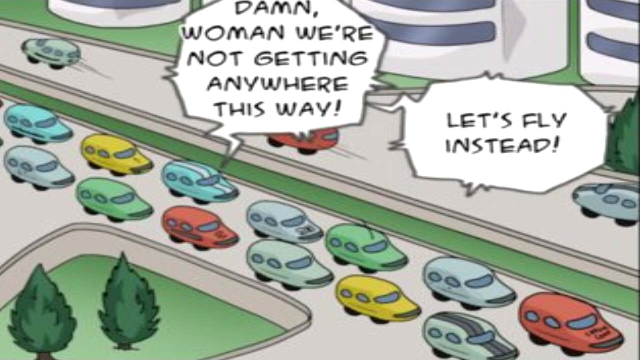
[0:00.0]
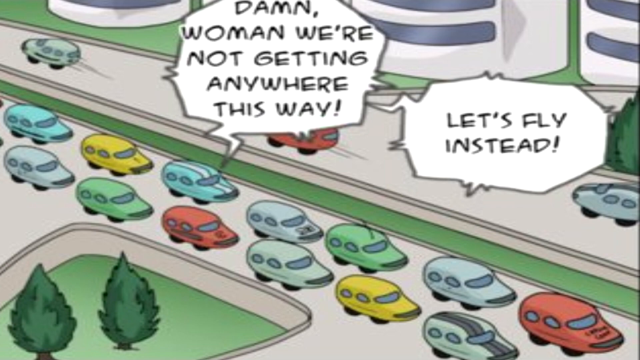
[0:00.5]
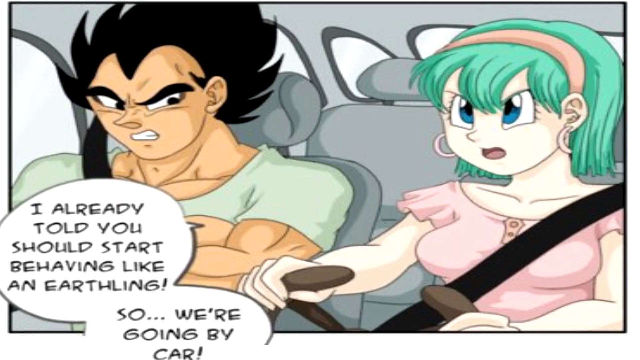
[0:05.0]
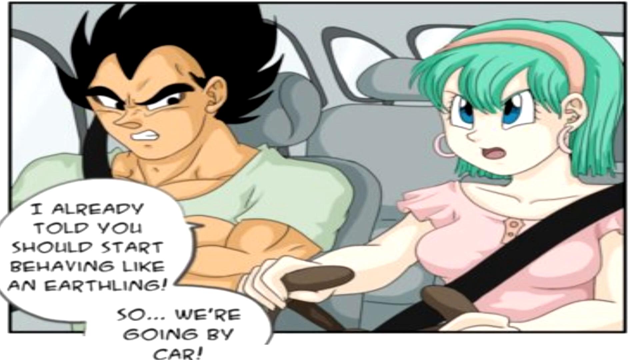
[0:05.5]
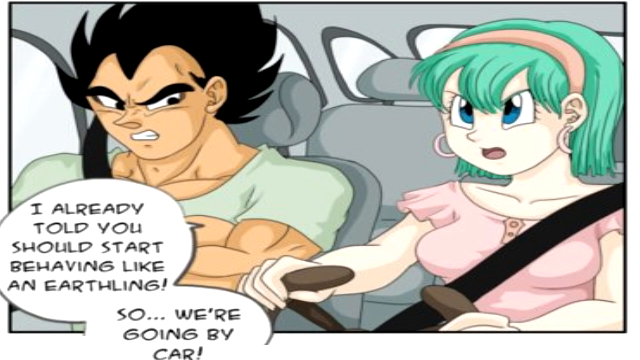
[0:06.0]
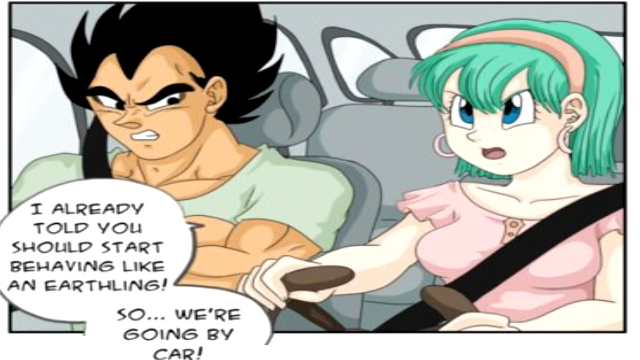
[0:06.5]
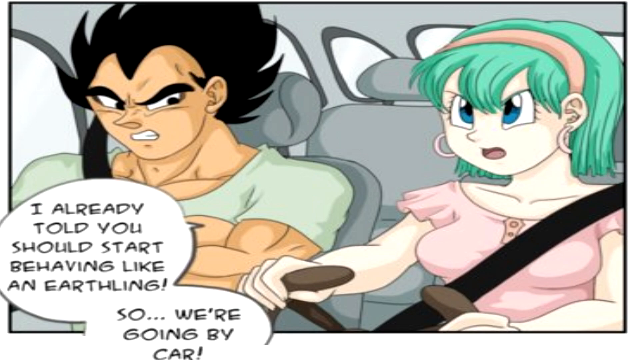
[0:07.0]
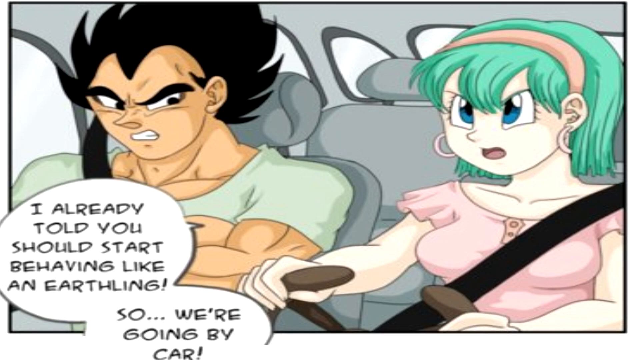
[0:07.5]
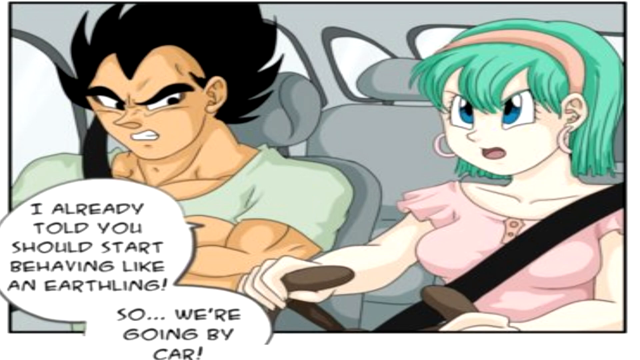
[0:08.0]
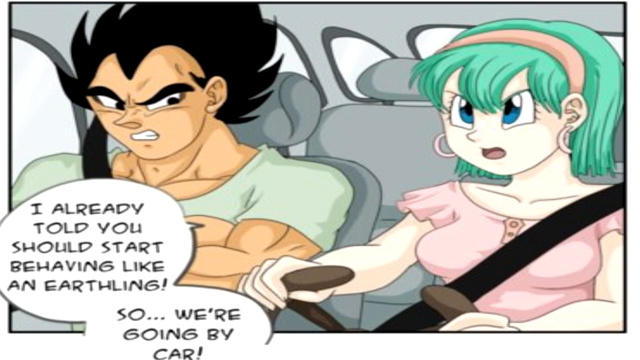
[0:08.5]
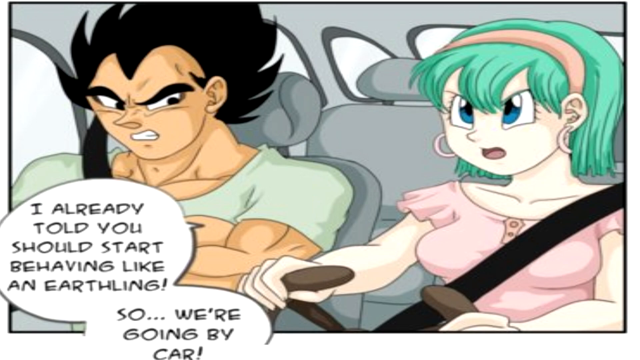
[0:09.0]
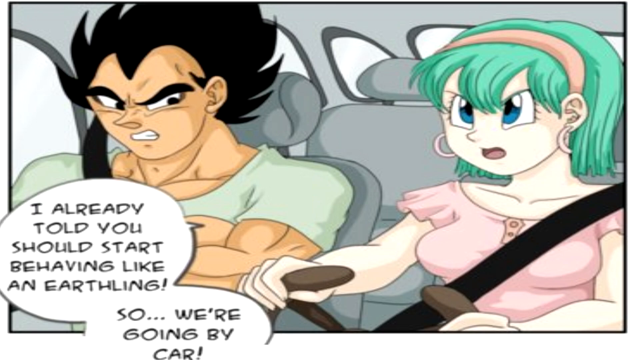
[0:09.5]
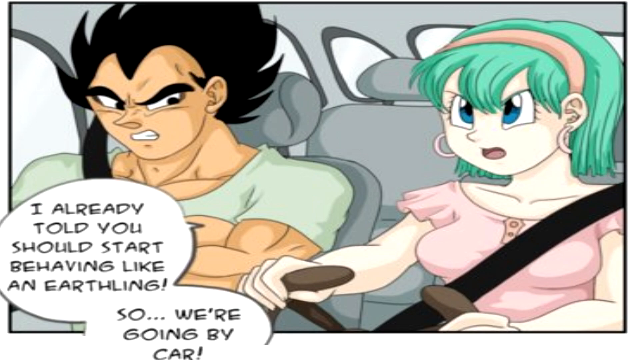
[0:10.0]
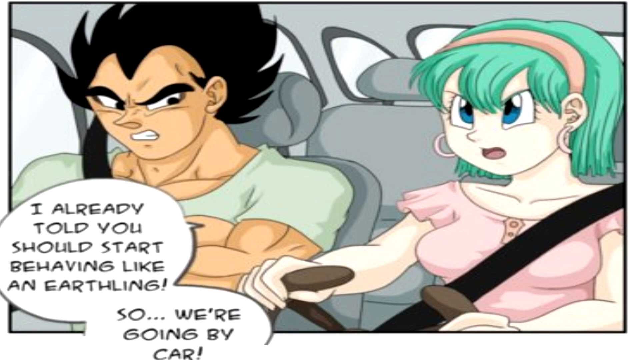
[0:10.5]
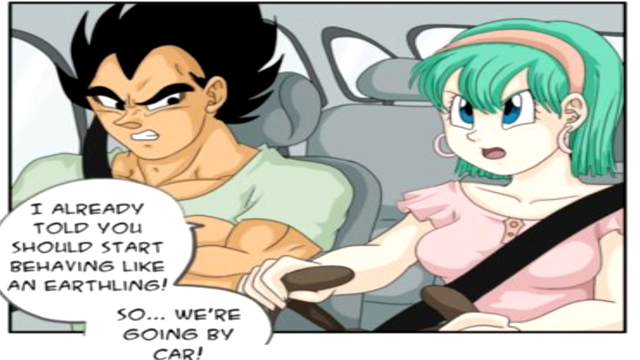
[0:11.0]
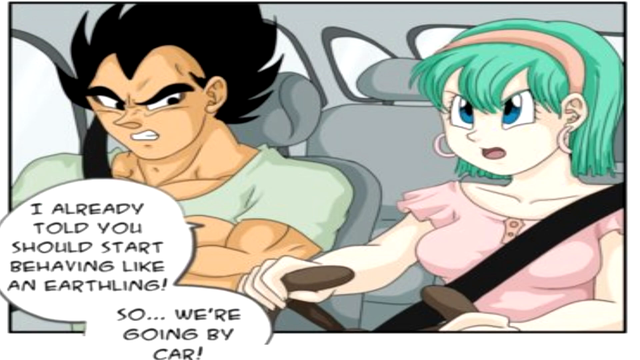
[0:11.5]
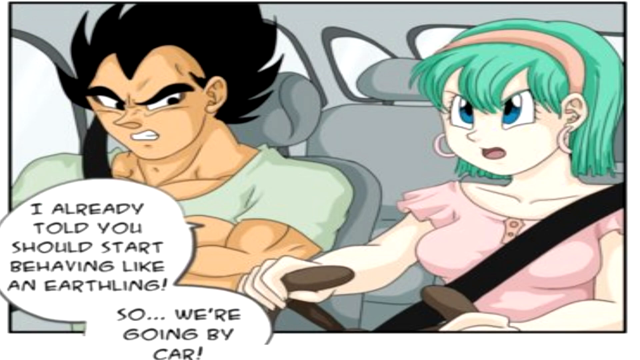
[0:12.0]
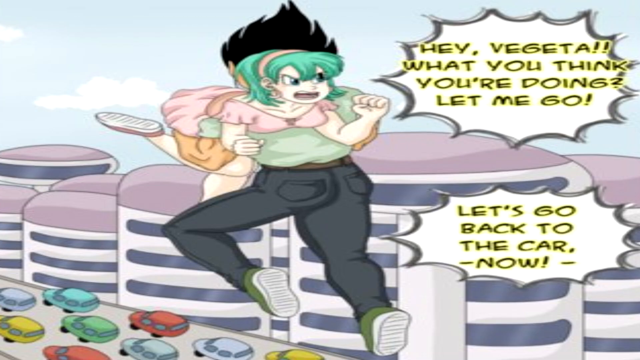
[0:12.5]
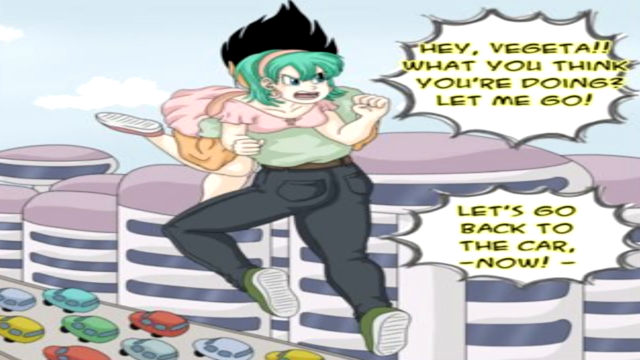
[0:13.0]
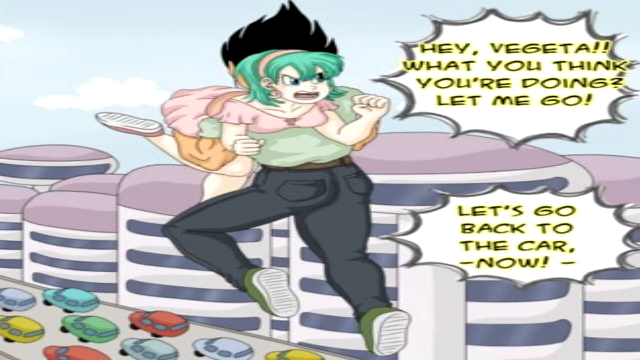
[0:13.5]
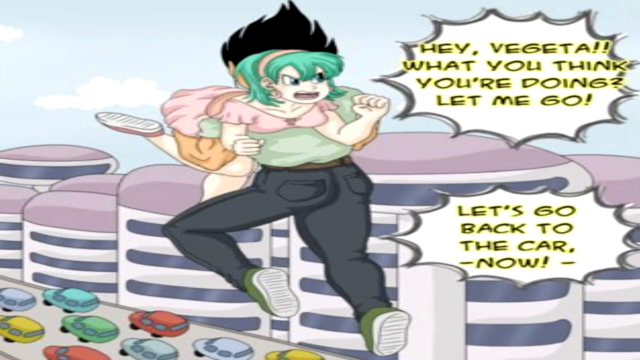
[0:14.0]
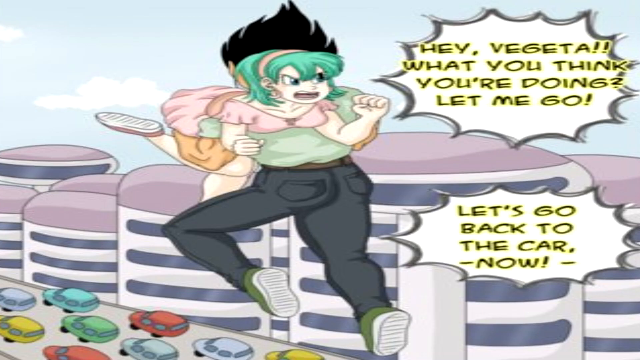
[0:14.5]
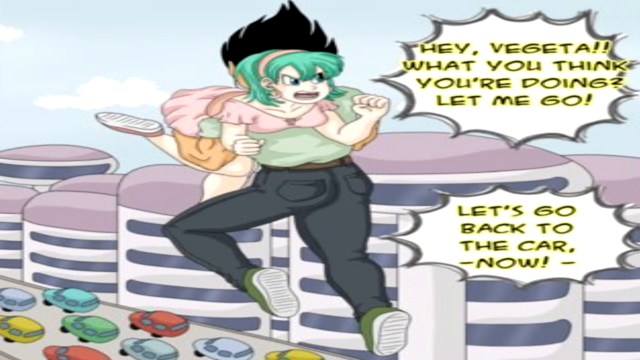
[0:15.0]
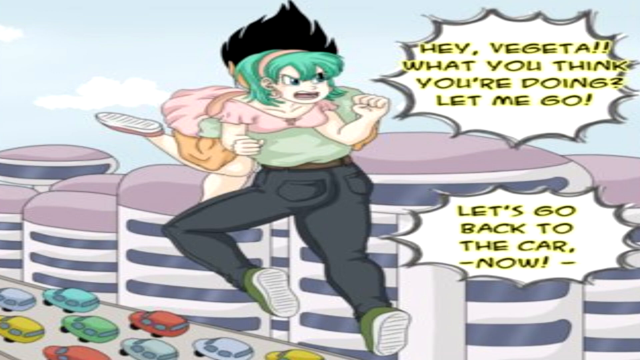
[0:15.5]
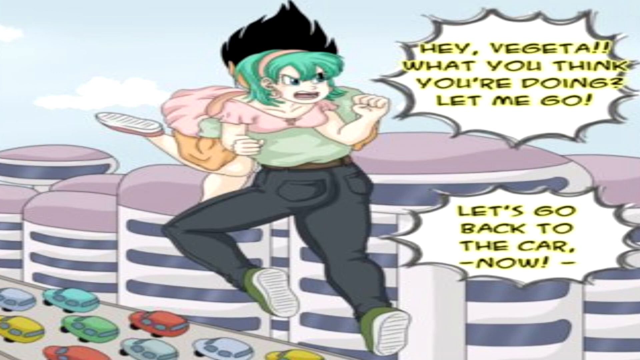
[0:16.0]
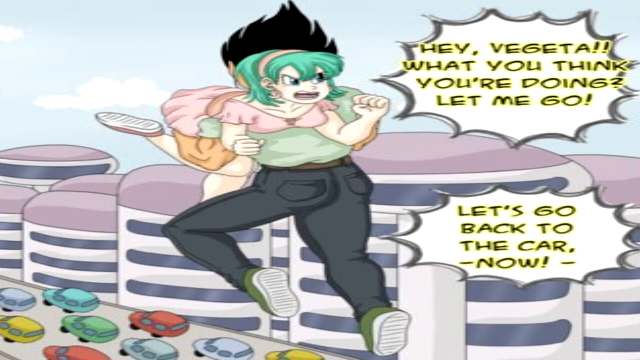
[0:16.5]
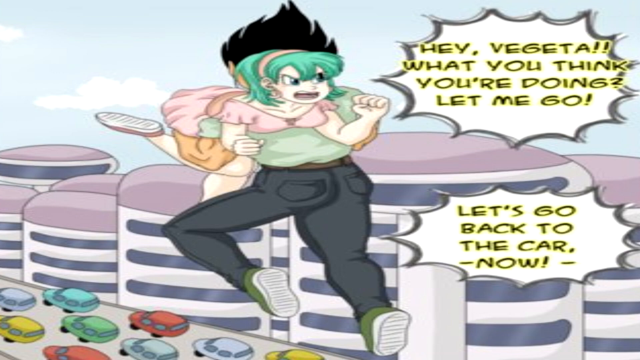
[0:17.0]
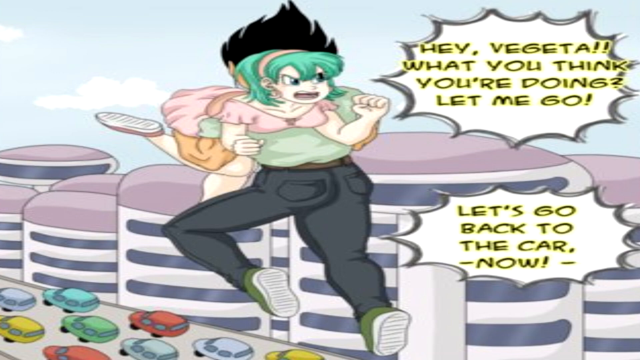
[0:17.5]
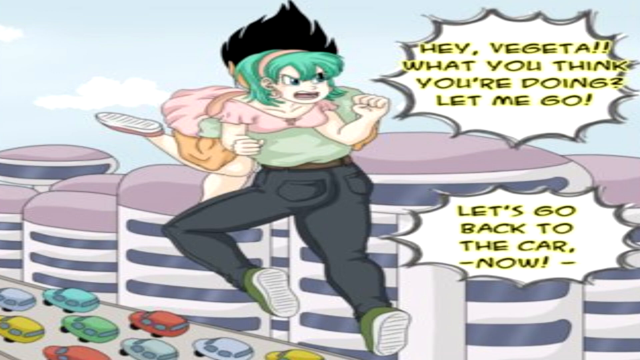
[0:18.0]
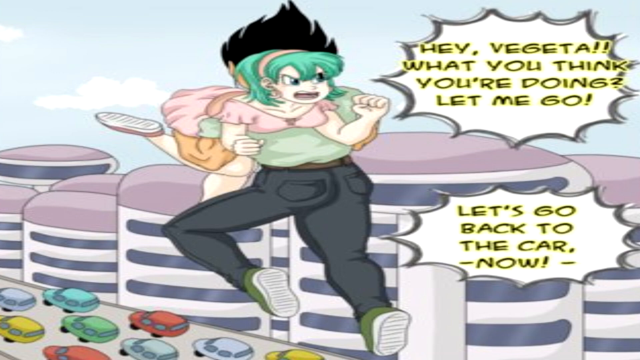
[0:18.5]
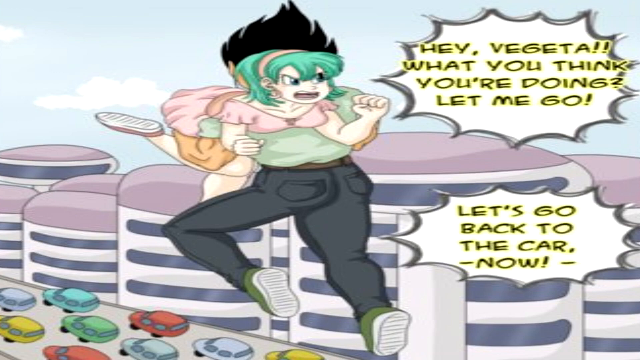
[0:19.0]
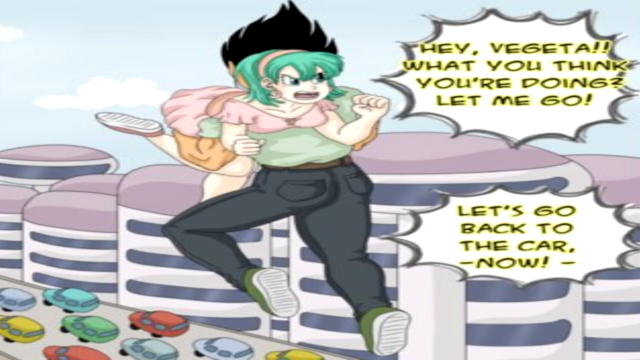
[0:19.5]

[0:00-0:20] Cars are on a public road, with cars of different colors standing in a line; it looks like there is a traffic jam. A man and a woman are in a car, and the woman is driving. The man is panicking, and words appear in a speech bubble: "Damn woman, we are not getting anywhere this week. Let's fly instead." The woman responds, "I already told you, you should start behaving like an earthly man."